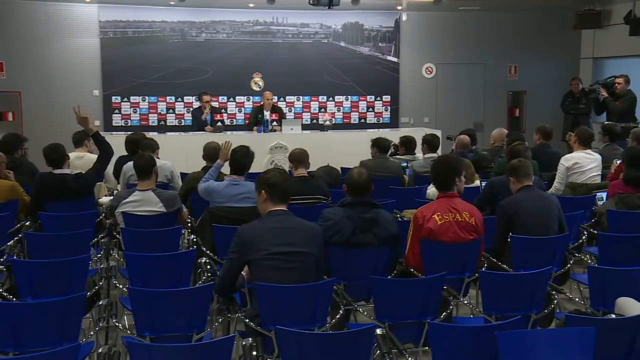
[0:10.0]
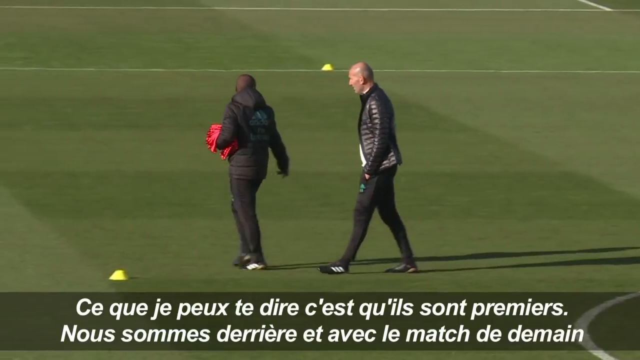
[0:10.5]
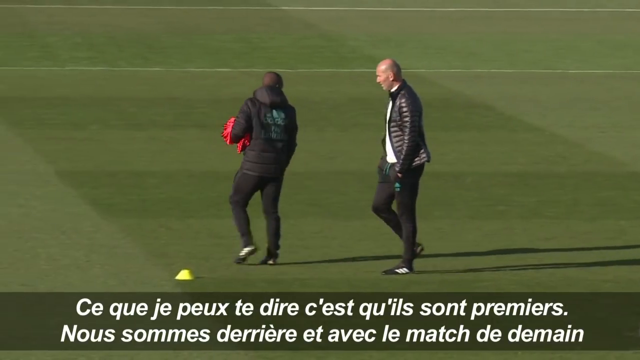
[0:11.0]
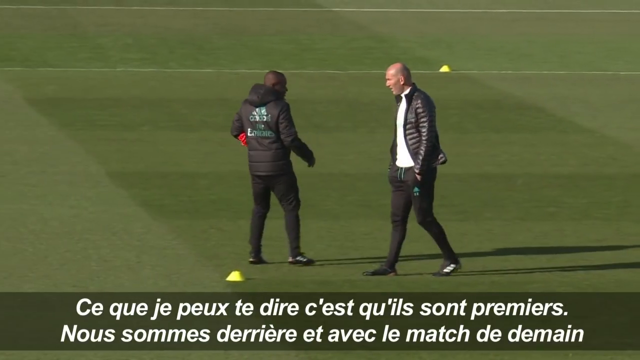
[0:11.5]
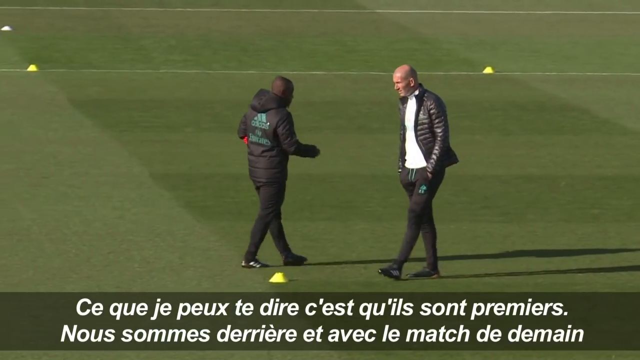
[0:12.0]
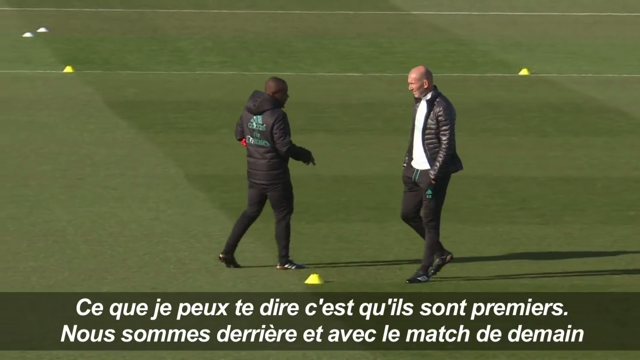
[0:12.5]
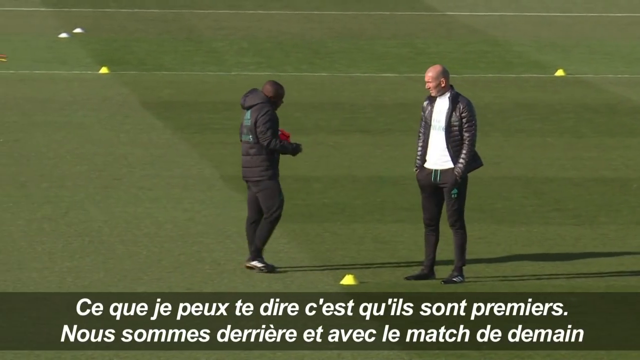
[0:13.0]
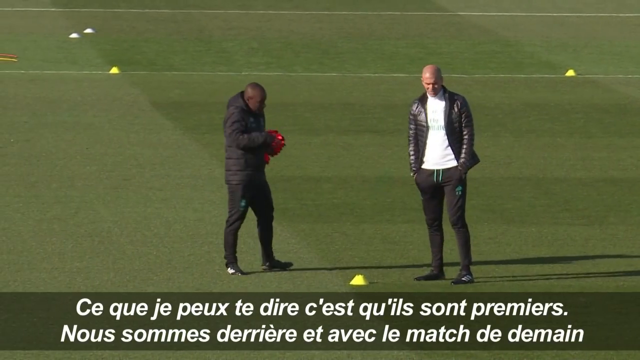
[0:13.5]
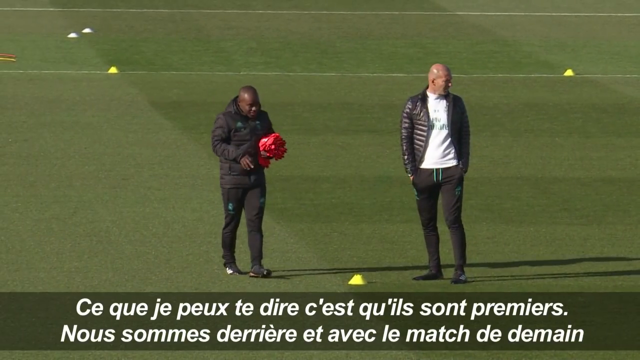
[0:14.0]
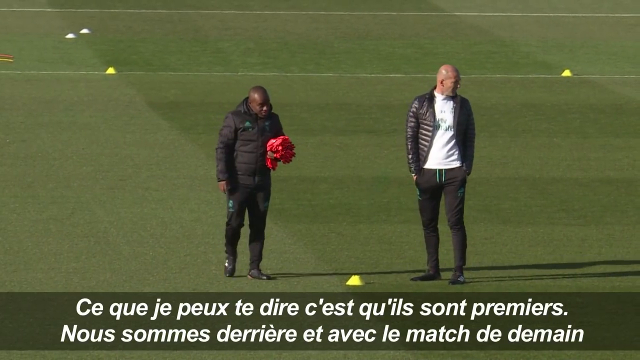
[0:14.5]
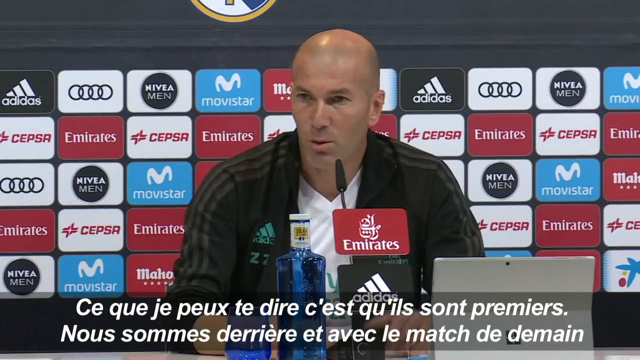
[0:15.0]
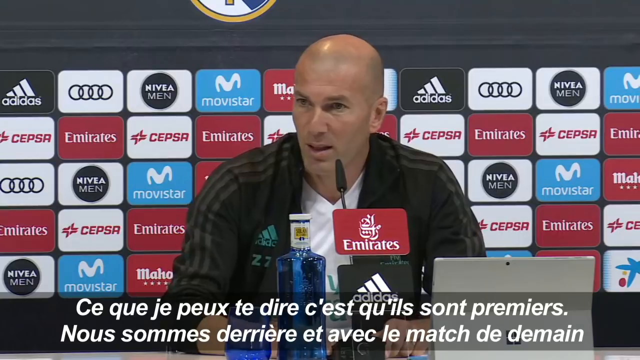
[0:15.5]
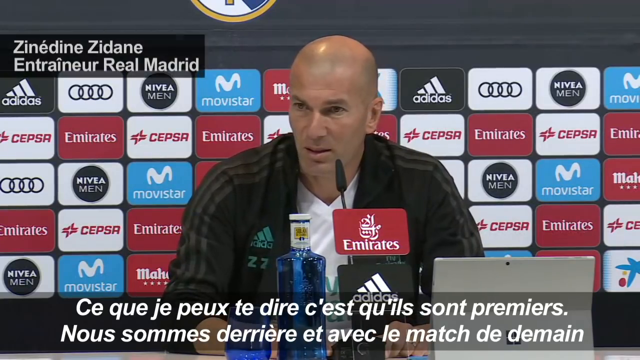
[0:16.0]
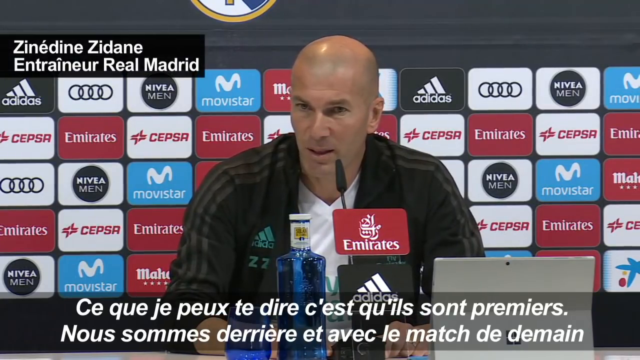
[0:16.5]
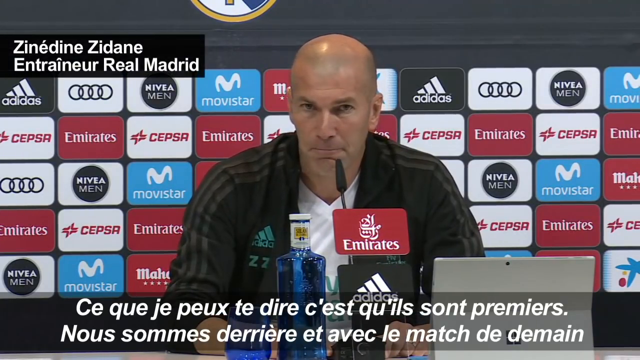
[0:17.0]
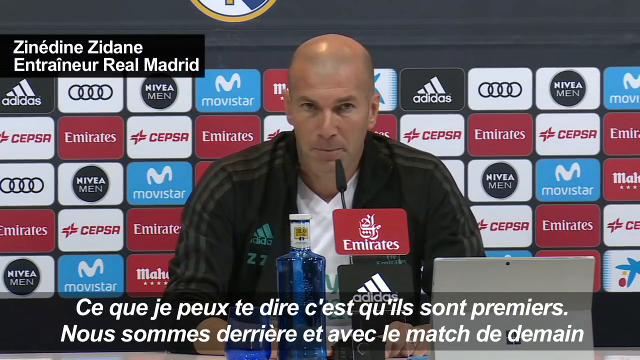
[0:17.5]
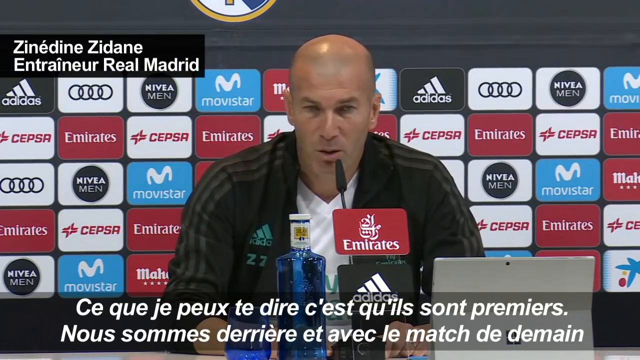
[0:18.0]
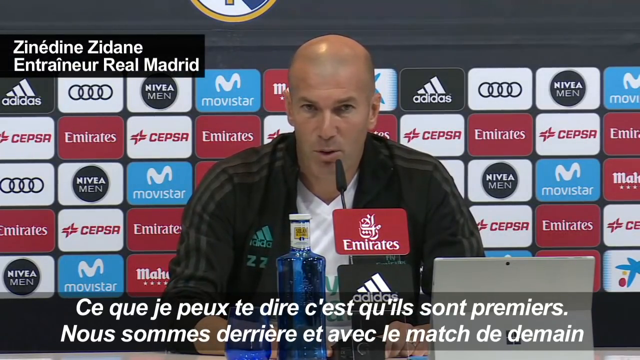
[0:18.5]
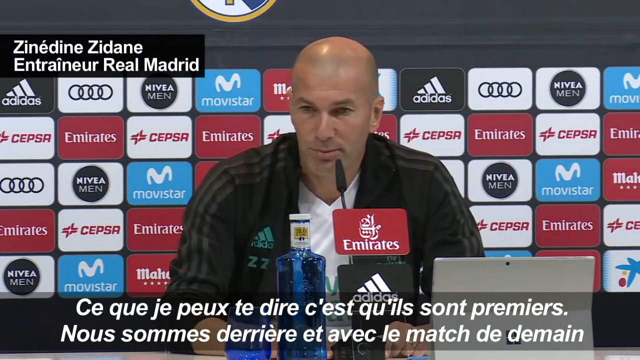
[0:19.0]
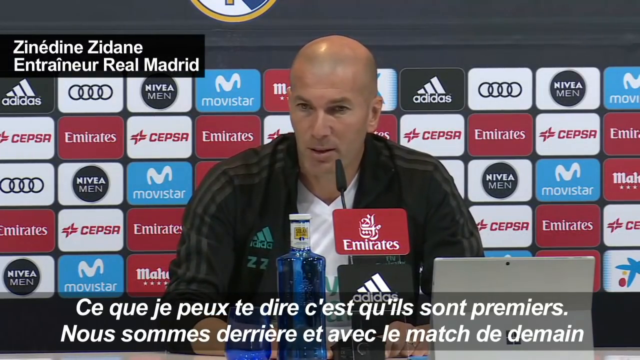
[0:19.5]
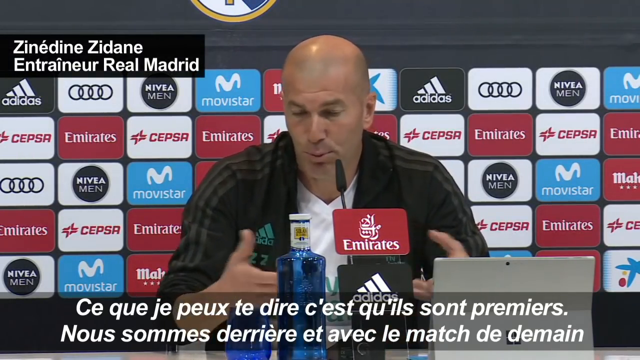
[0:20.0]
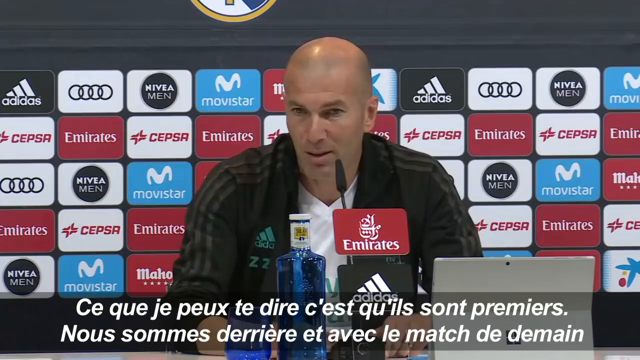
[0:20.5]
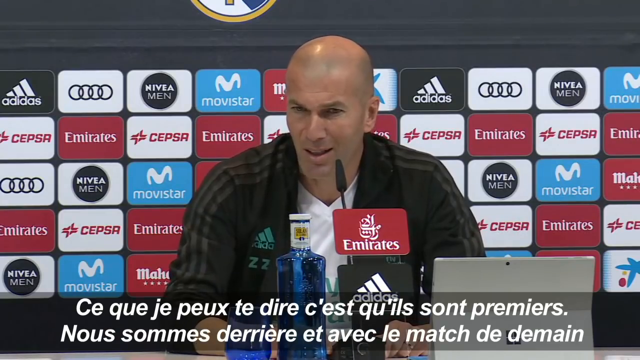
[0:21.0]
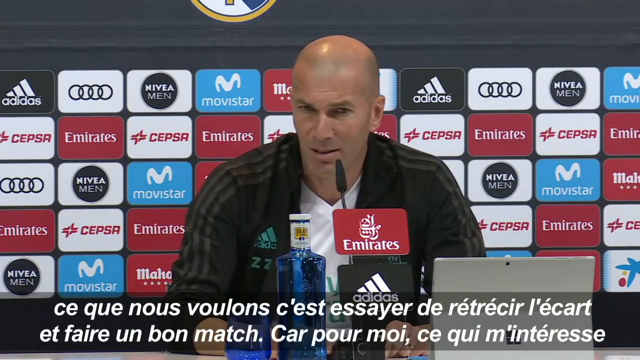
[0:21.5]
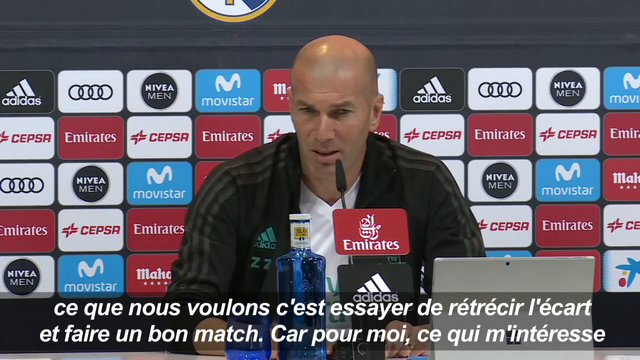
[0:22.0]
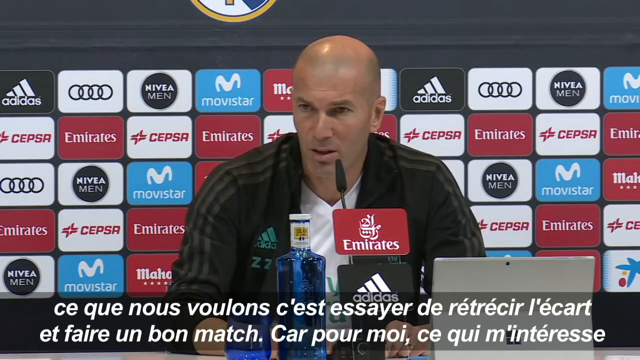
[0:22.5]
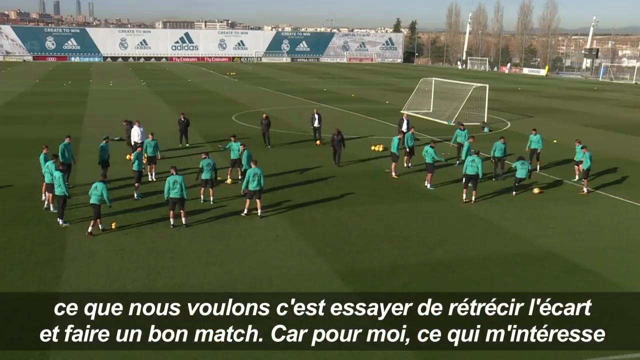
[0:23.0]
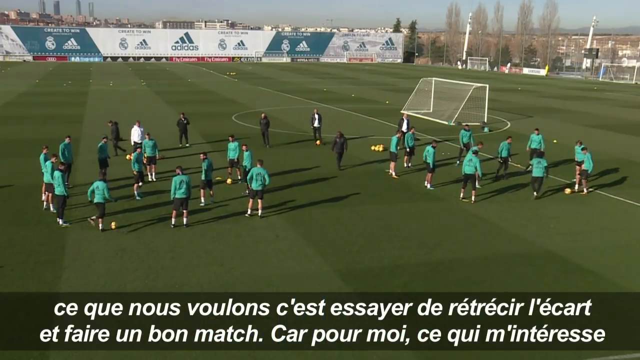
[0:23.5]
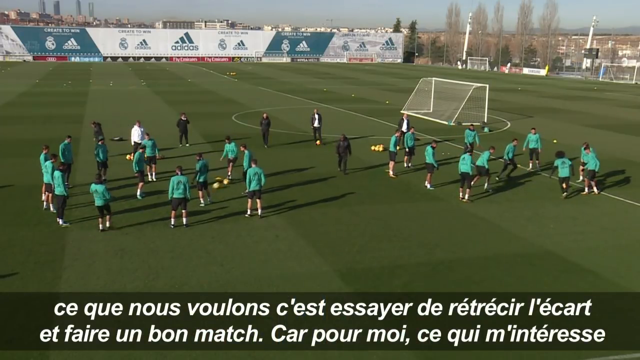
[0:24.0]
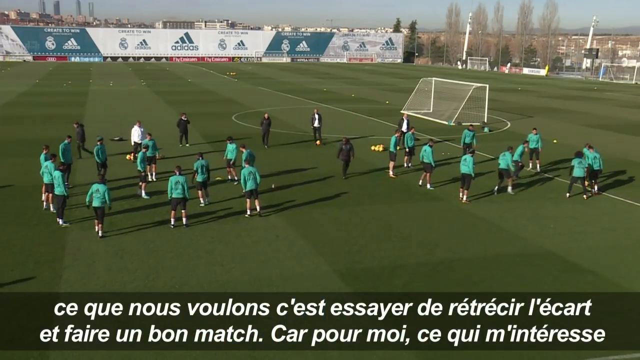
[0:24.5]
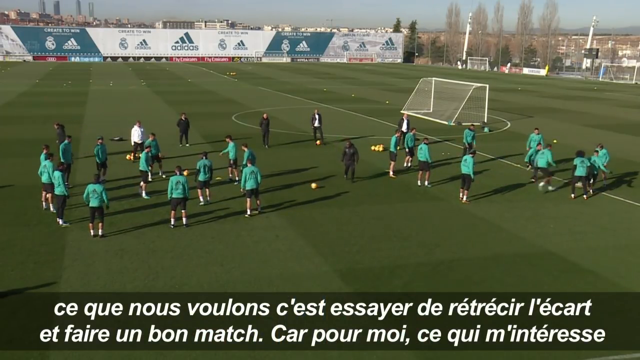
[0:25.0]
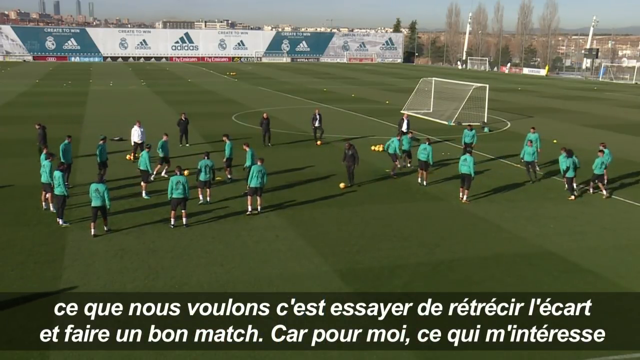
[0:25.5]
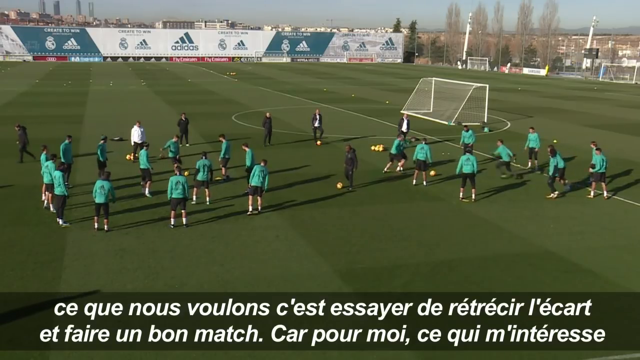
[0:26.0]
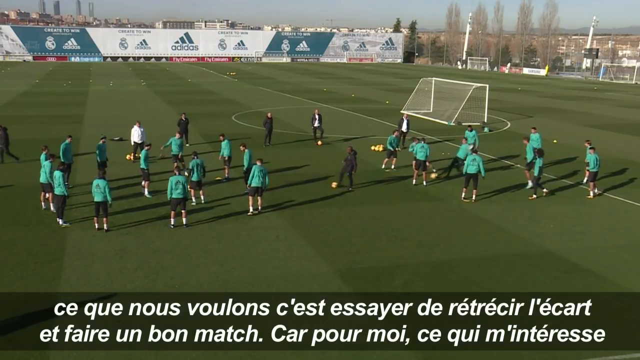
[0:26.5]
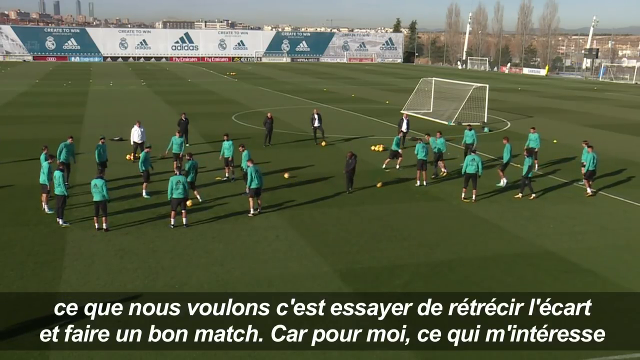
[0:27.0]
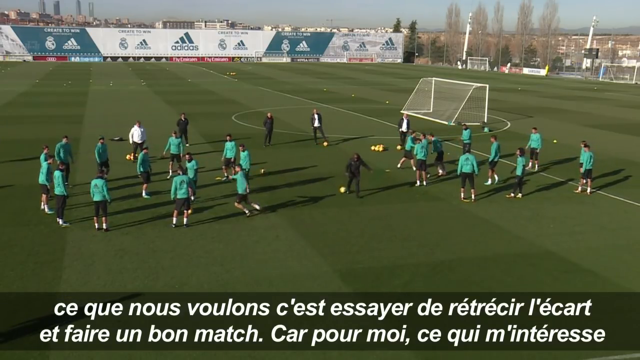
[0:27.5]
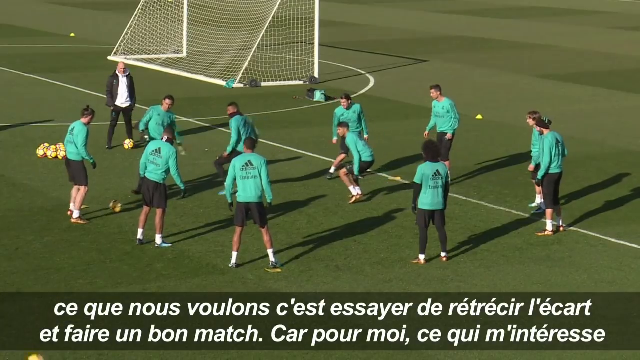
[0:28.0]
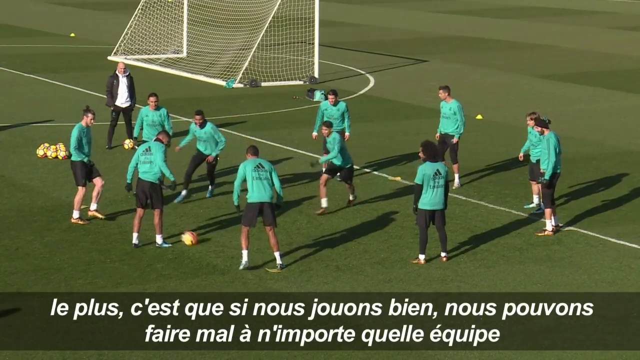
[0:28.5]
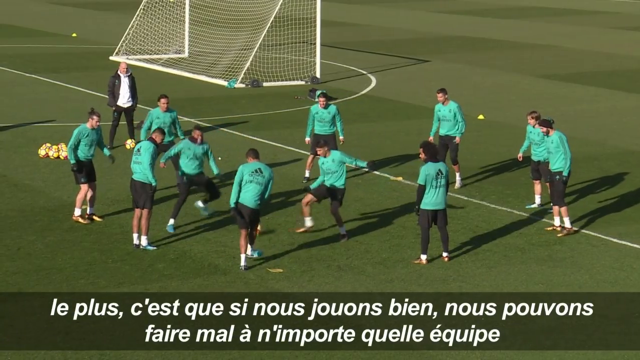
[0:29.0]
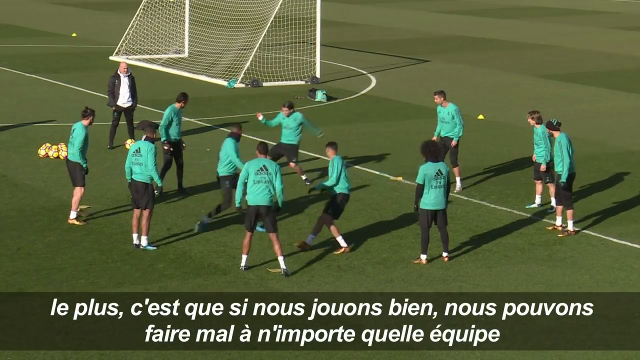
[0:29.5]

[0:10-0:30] Two people walk on a soccer field, with closed captions in white lettering in French underneath. The one on the viewer's left looks like a player: a young African-American person in a black jacket and dark pants. The person to his right, who looks like a coach, is older and bald and wears a jacket, a white shirt, black pants and cleats. The same person who looks like the coach, with an Adidas emblem on his black jacket, then speaks into a microphone that has Emirates on it and Adidas underneath.